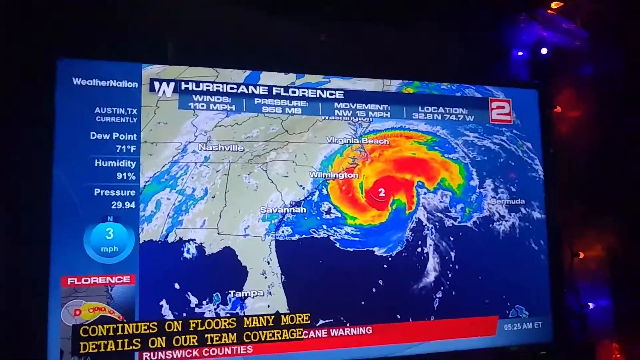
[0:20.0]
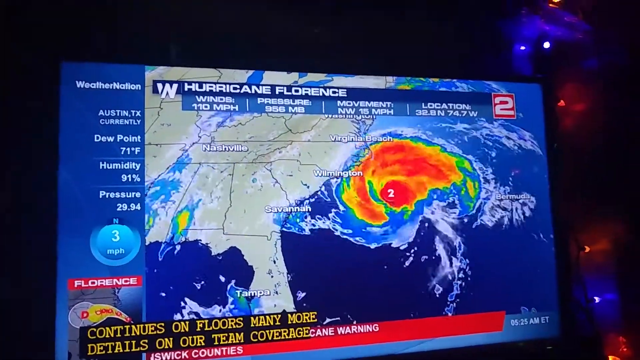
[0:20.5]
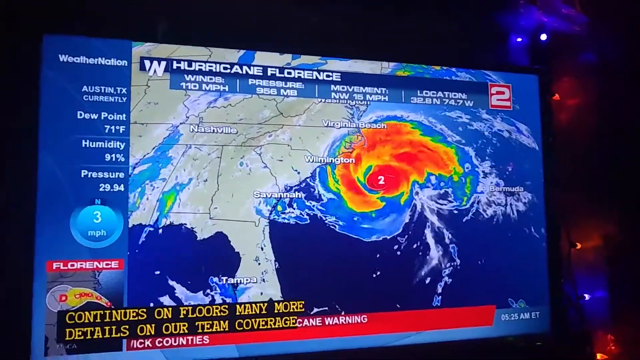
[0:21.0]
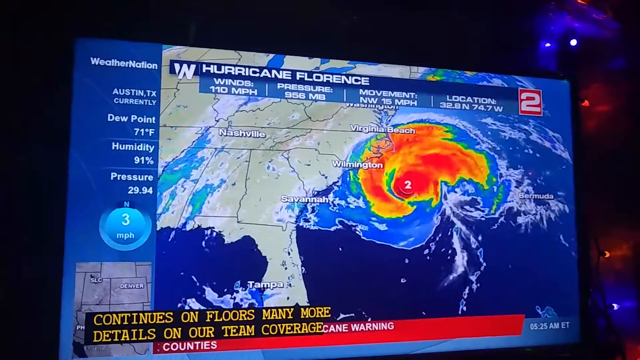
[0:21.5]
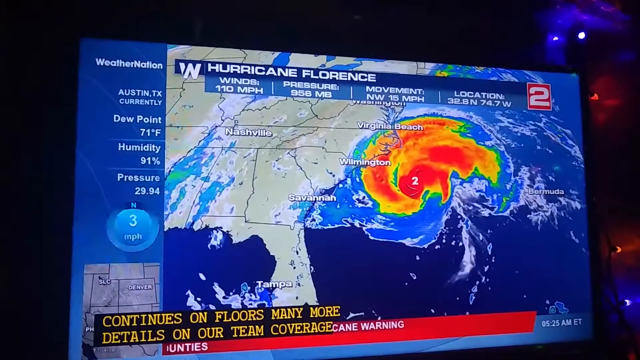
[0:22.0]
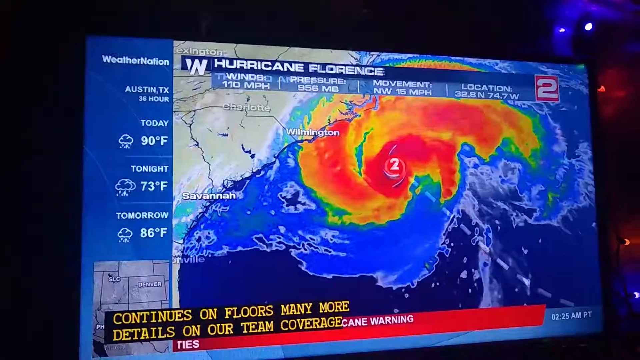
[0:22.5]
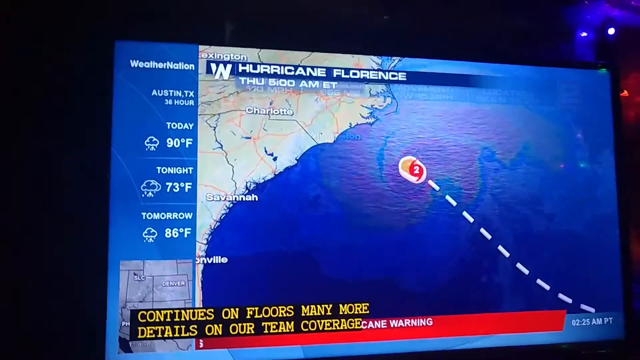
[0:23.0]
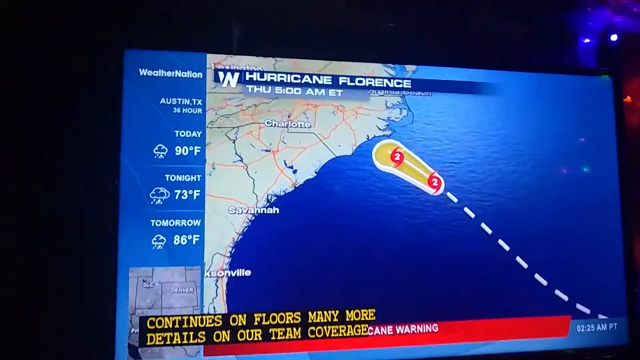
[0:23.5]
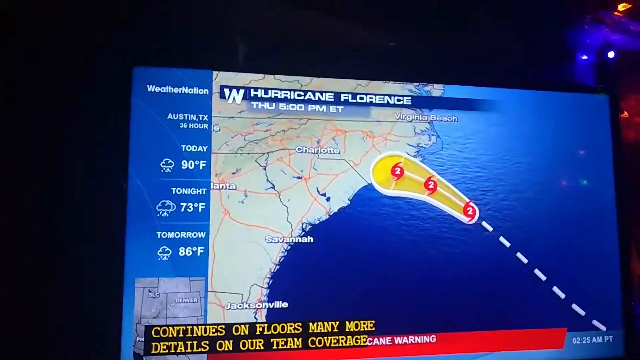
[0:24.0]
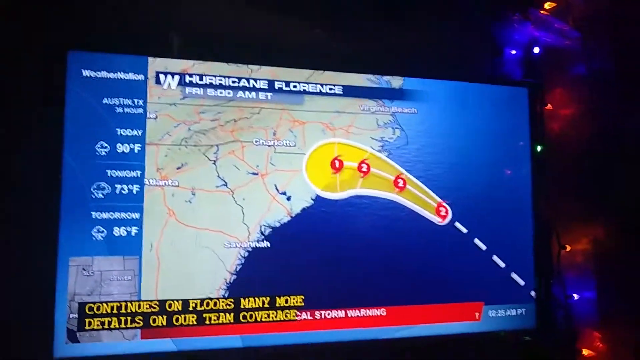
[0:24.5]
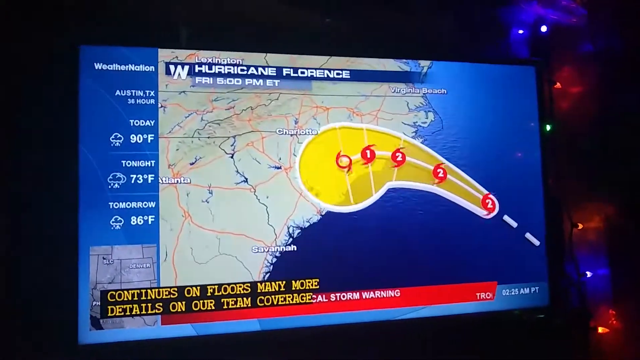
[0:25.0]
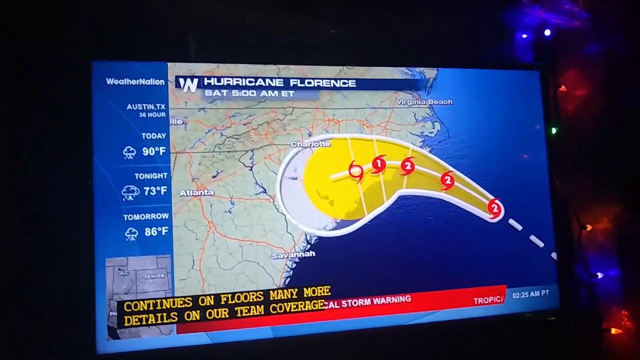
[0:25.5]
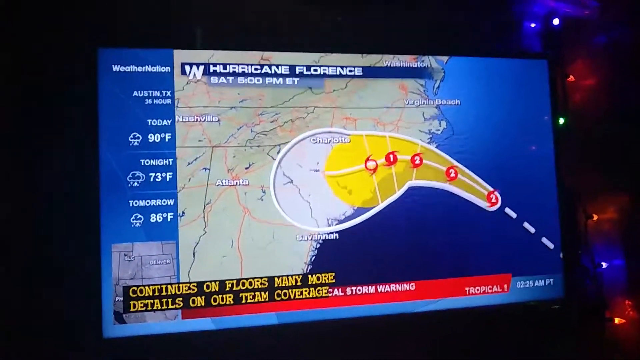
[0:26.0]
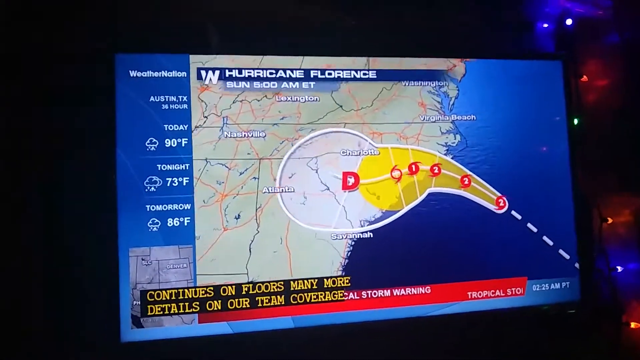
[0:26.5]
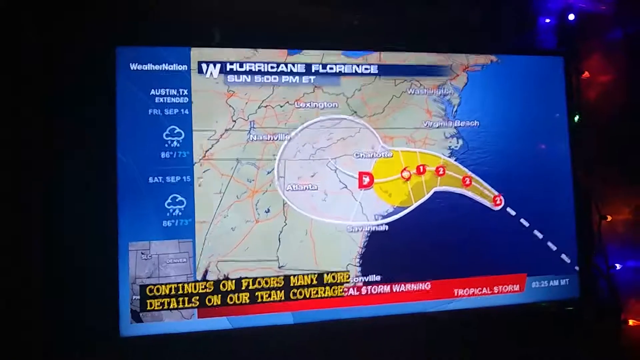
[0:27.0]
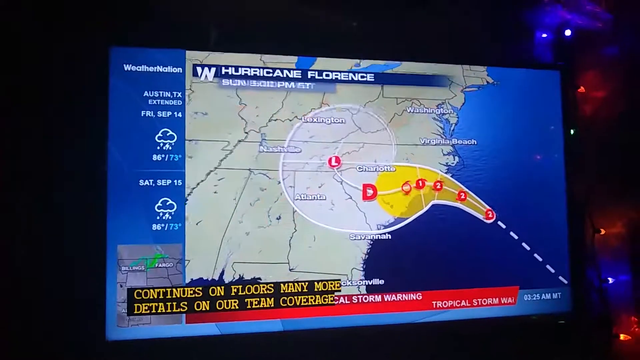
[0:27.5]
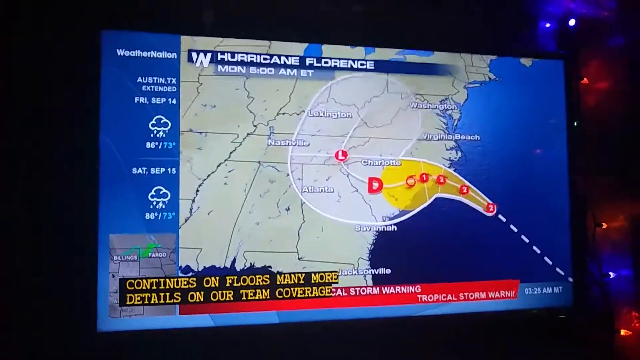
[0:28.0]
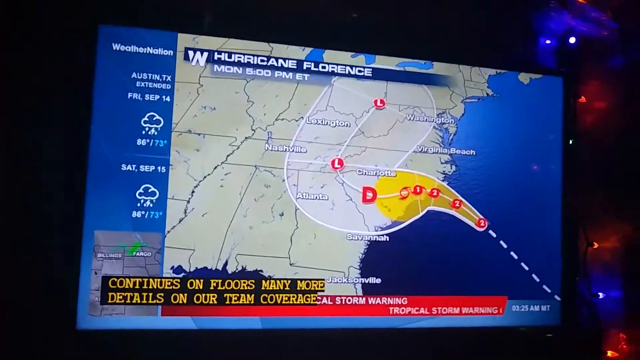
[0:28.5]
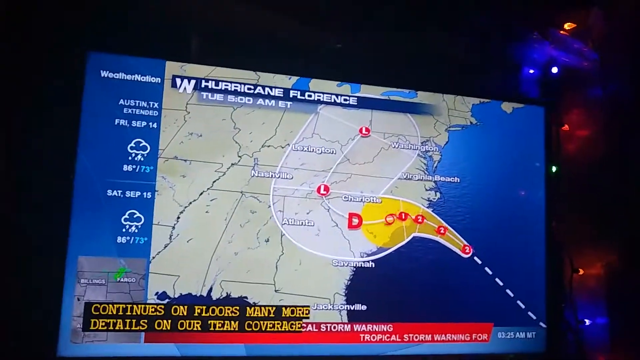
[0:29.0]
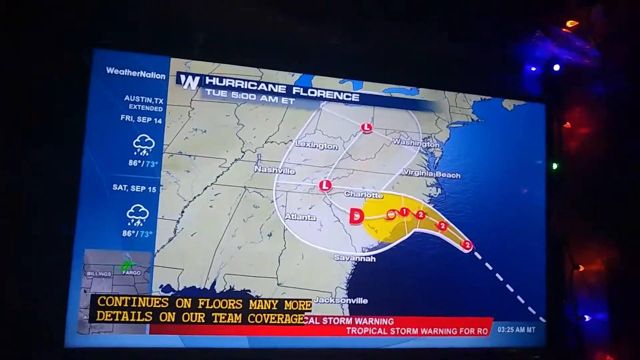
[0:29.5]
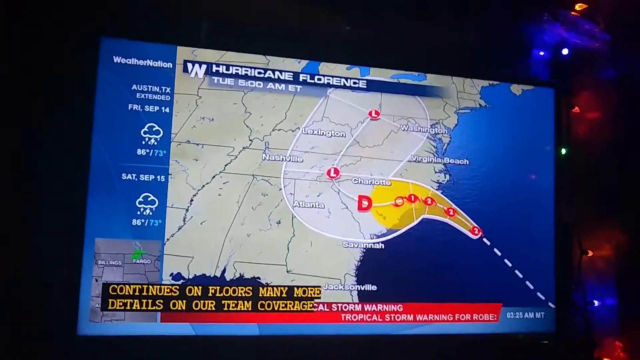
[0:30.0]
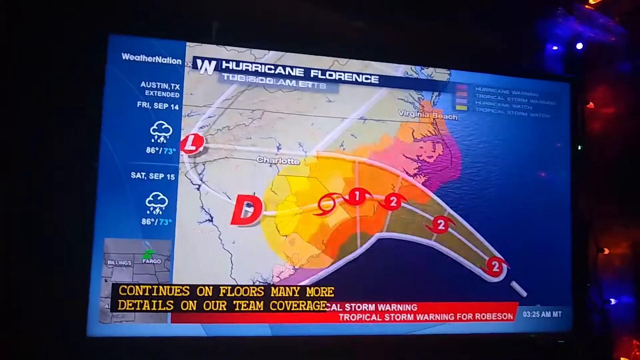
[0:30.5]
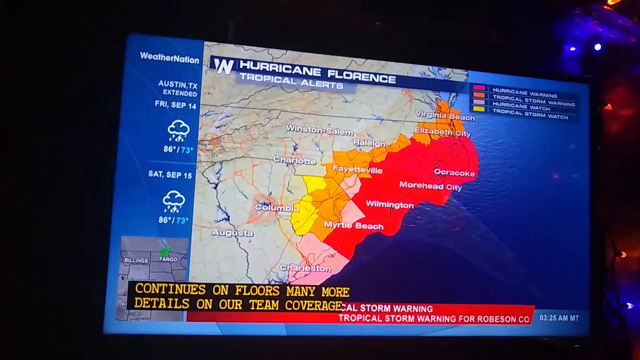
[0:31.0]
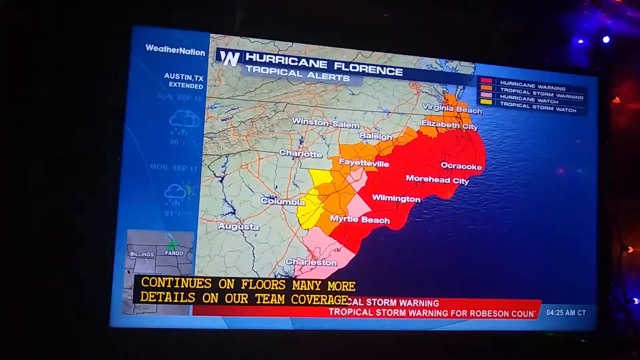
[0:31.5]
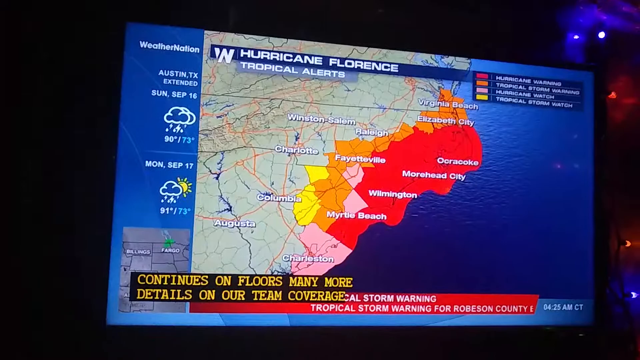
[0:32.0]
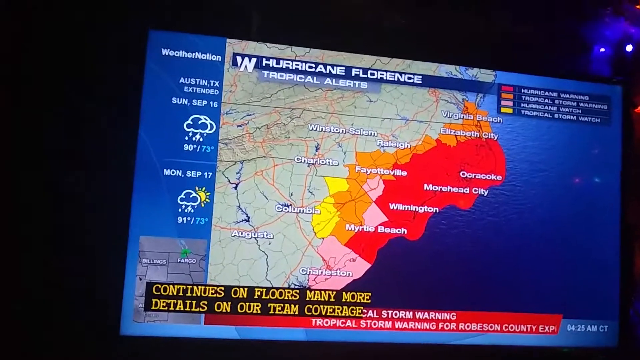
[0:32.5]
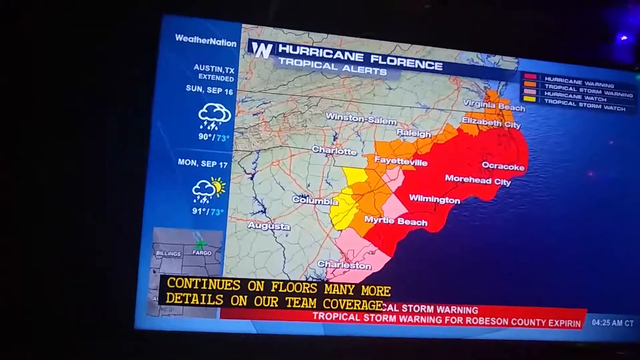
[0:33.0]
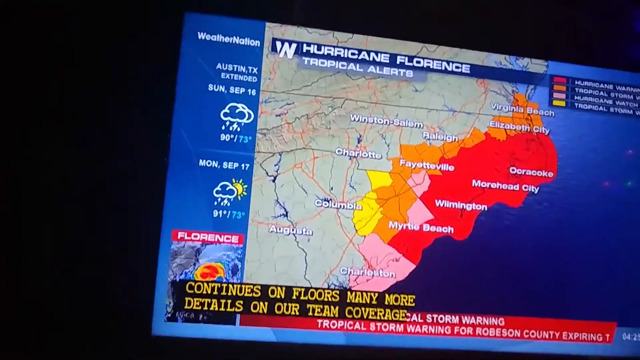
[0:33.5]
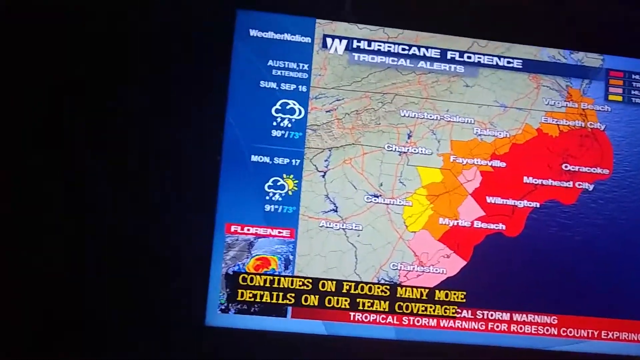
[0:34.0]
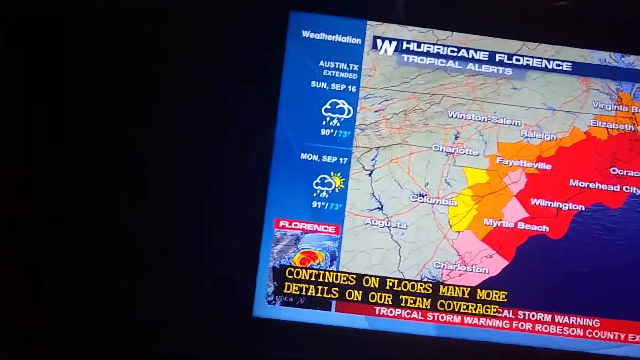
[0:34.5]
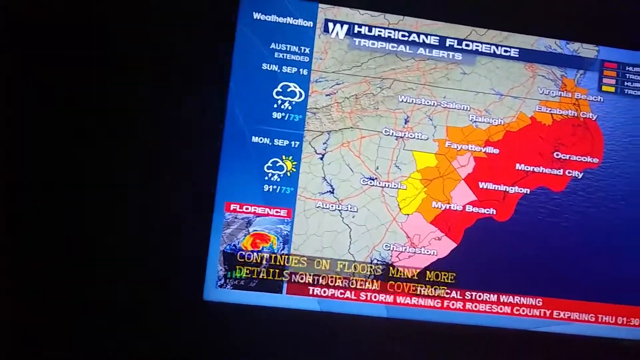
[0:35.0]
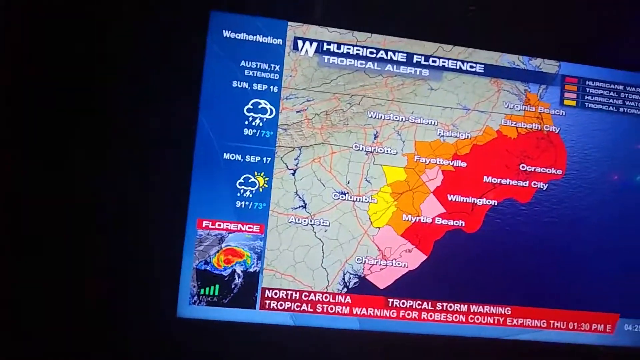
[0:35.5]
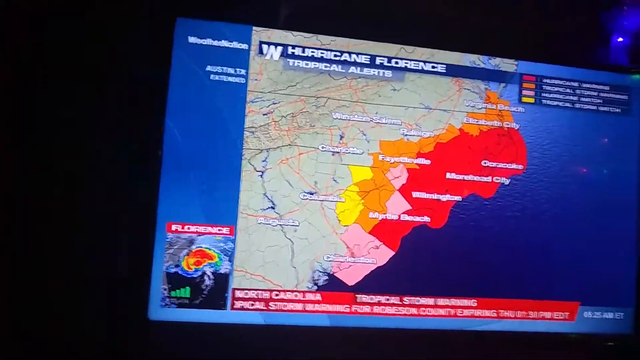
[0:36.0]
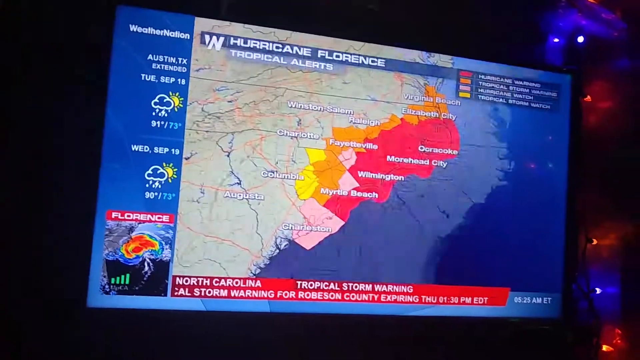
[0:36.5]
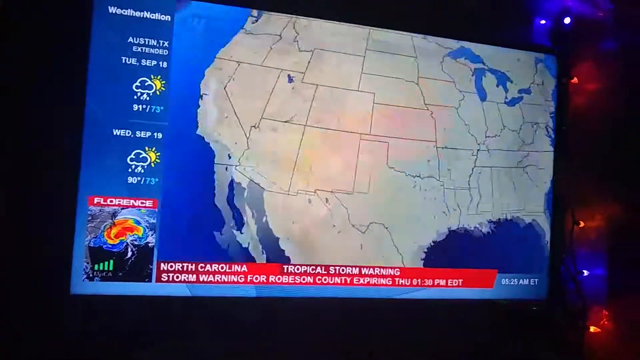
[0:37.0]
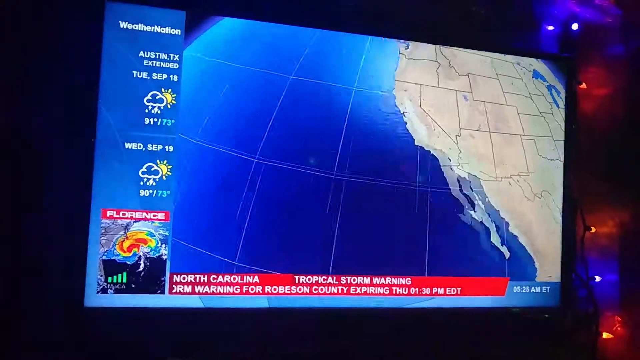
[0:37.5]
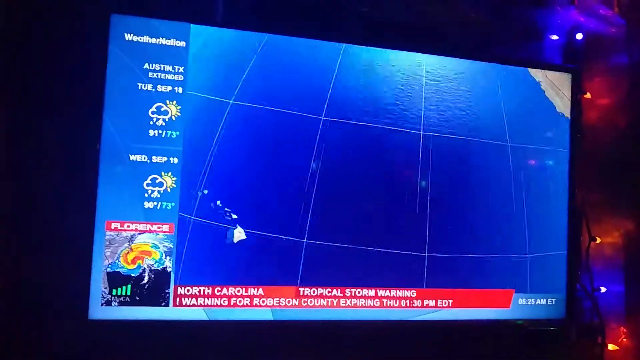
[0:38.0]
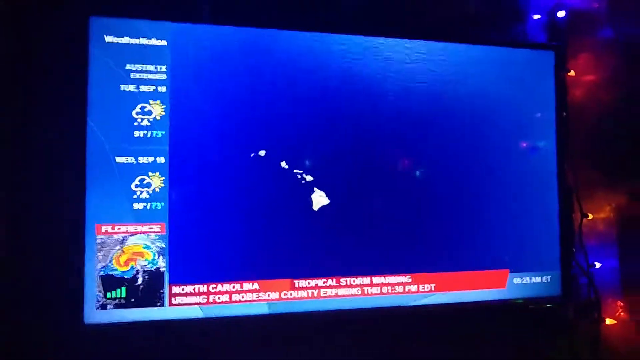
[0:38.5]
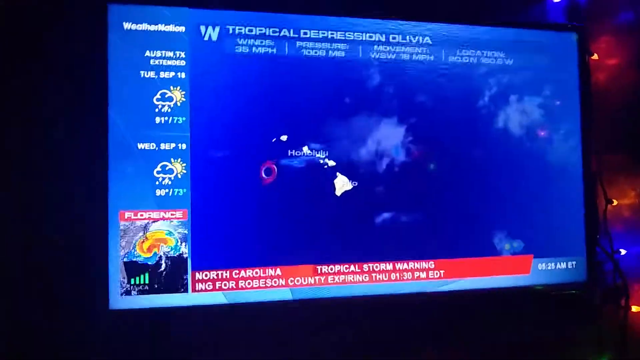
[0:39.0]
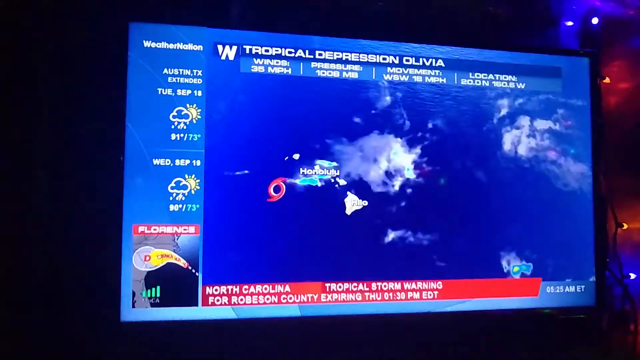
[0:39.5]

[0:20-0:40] The map shows the path of the hurricane, then transitions to an estimated path, also showing the intensity of the hurricane and the area of error. The possible area is highlighted in yellow and the lines are in white. The path curves slightly downward, southward, and a red D appears near Charlottesville. The line then snakes back north and is drawn swiftly upward above Virginia. The red circle now has an L icon in it representing the hurricane. The footage zooms back in to the east coast of North Carolina, showing a heat map of areas where warnings are issued: the east coast of North Carolina and some of South Carolina are almost entirely red, and the rest of the areas are orange or pink, with the orange area reaching roughly up to Raleigh. After another transition, the globe begins quickly rotating over to Hawaii.